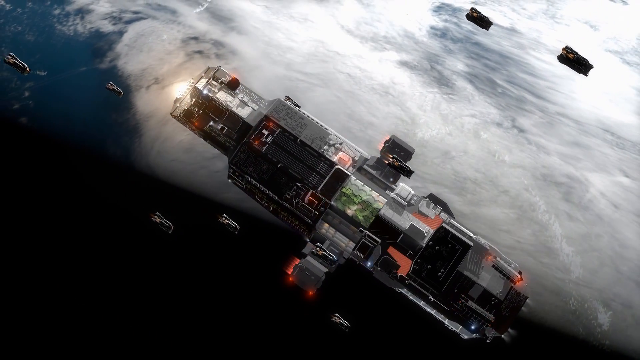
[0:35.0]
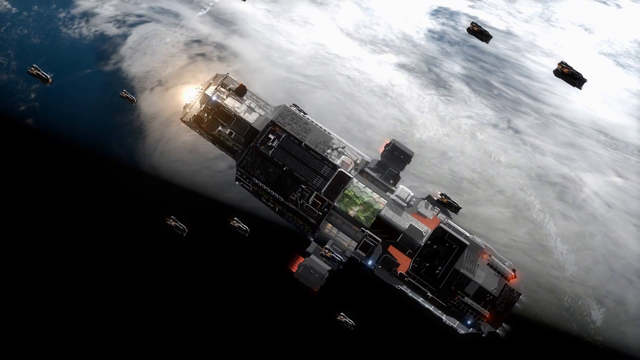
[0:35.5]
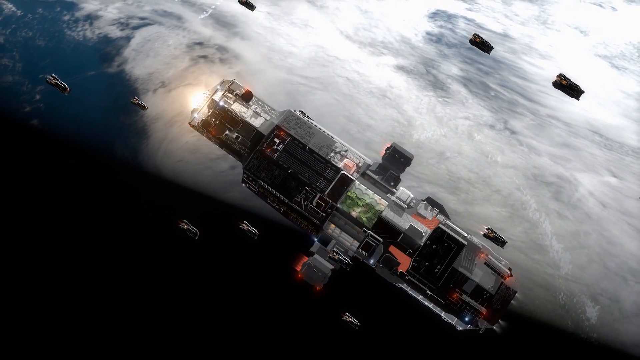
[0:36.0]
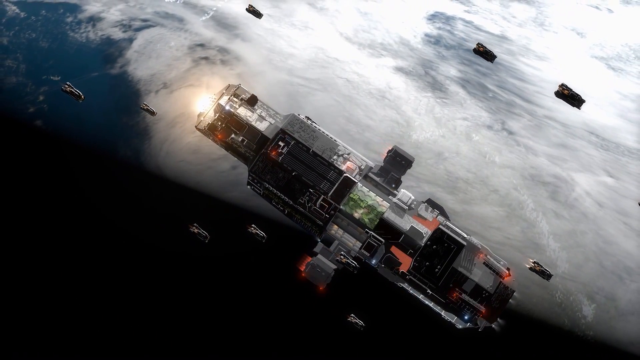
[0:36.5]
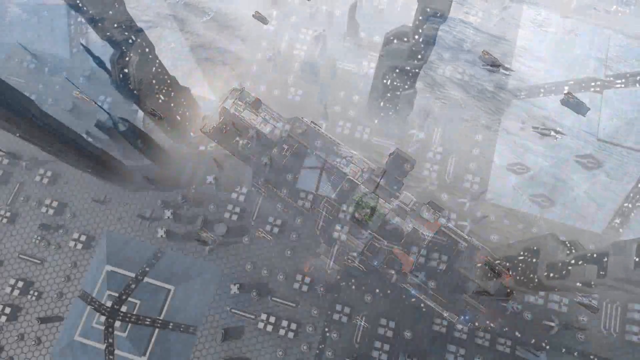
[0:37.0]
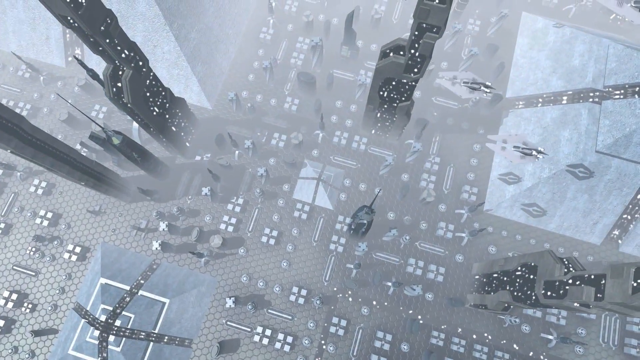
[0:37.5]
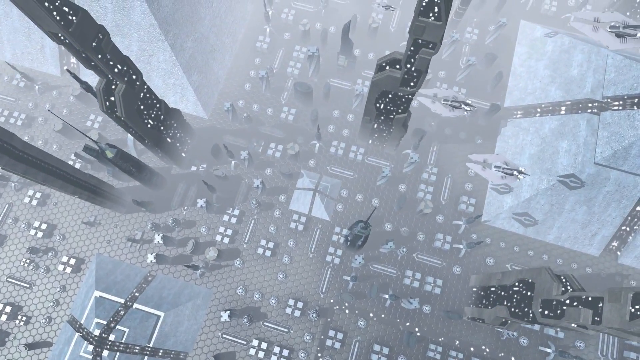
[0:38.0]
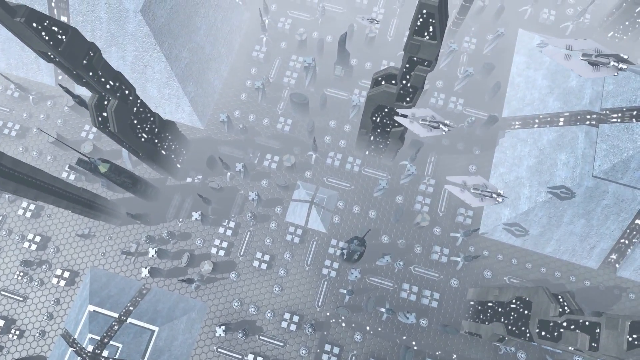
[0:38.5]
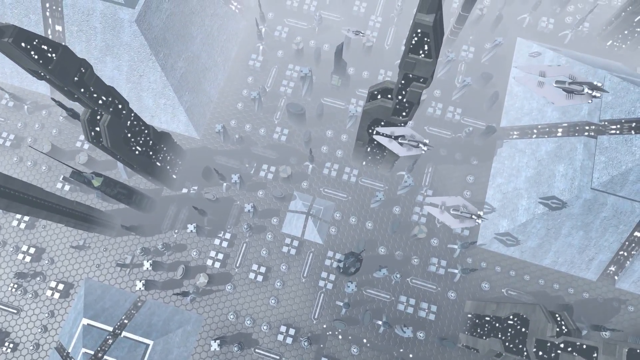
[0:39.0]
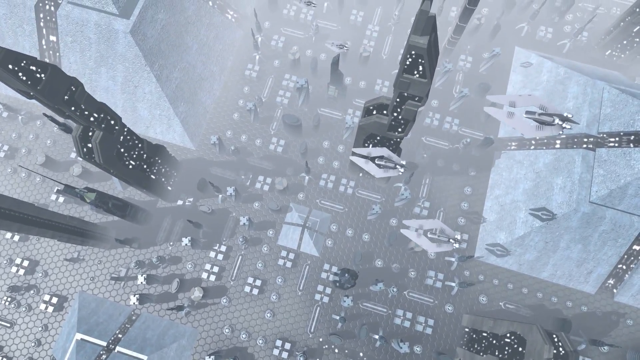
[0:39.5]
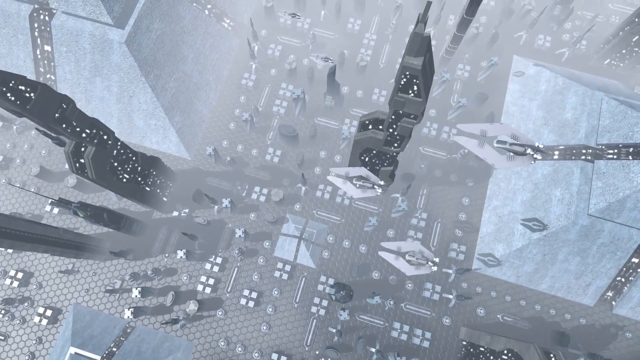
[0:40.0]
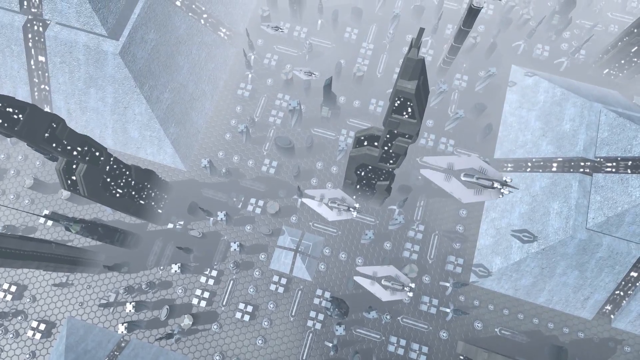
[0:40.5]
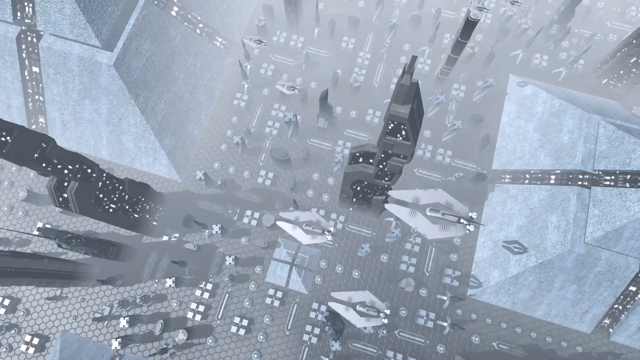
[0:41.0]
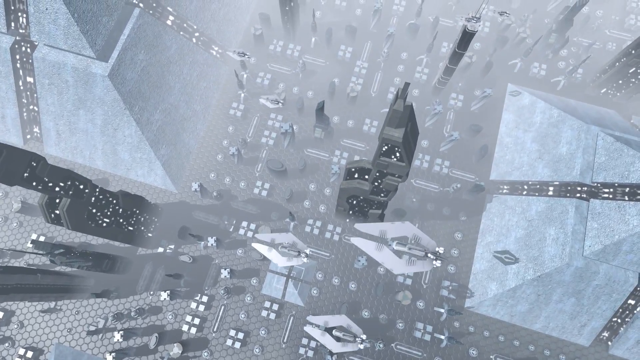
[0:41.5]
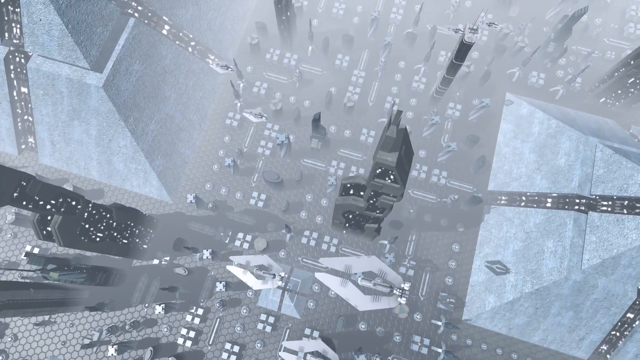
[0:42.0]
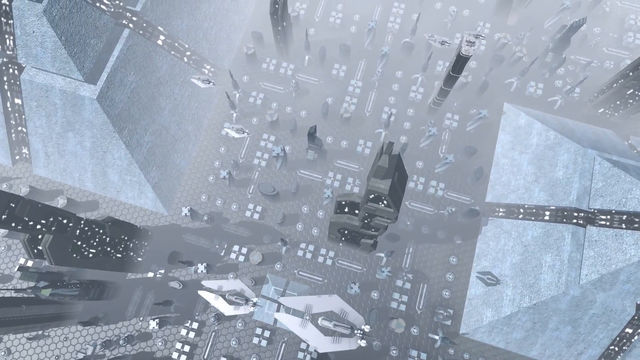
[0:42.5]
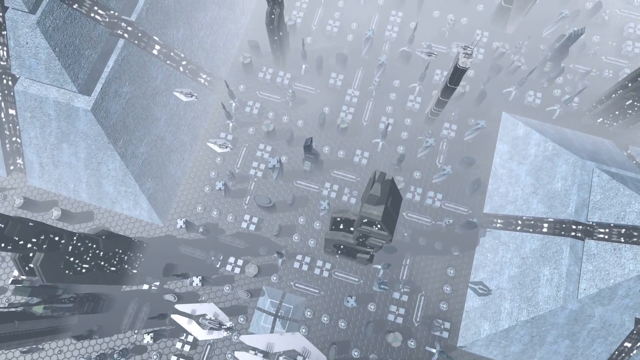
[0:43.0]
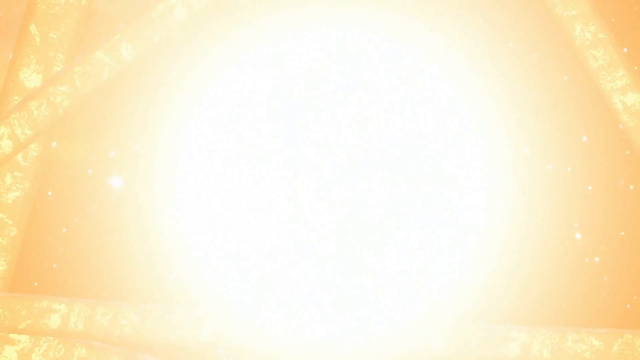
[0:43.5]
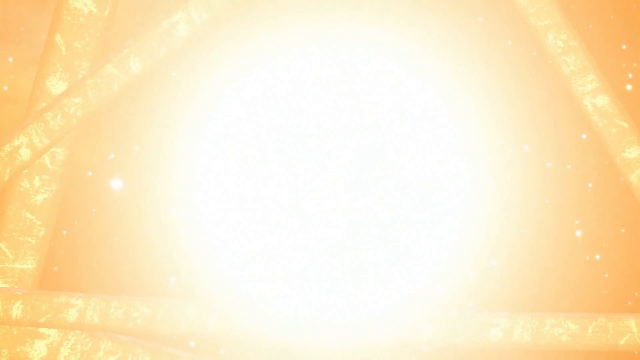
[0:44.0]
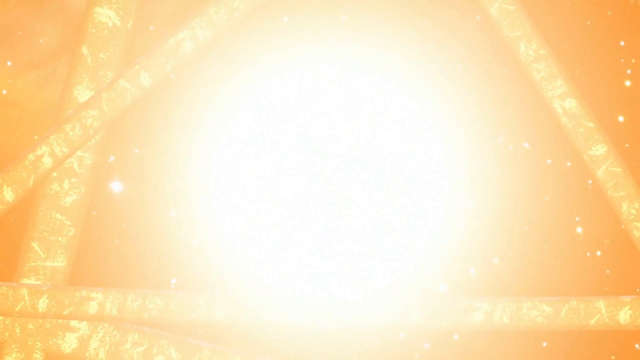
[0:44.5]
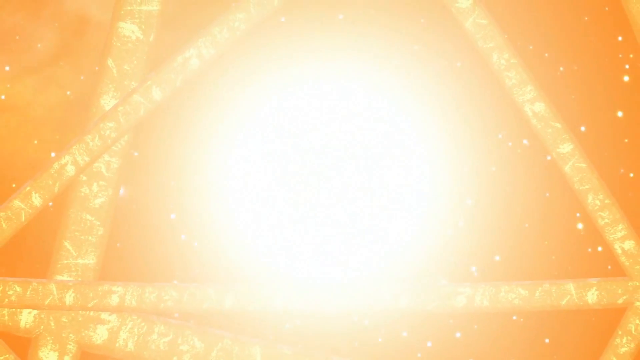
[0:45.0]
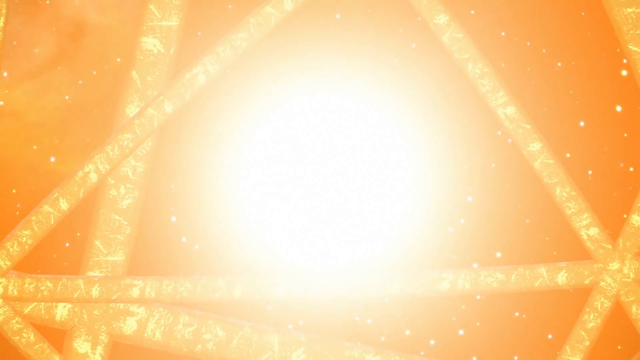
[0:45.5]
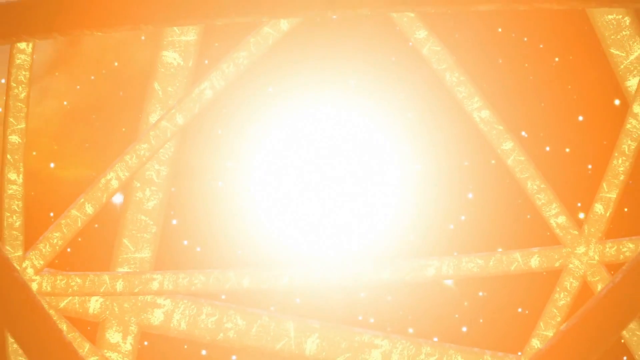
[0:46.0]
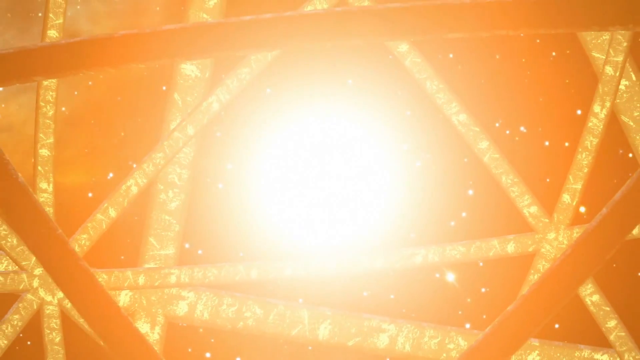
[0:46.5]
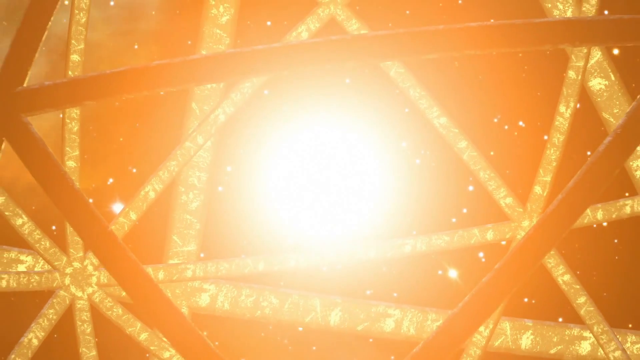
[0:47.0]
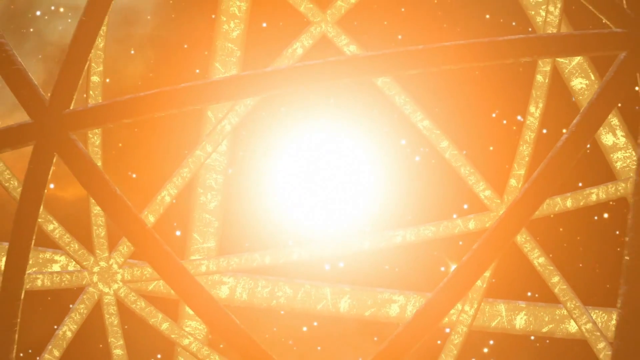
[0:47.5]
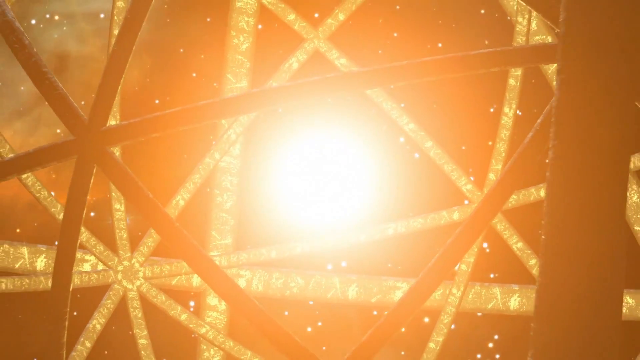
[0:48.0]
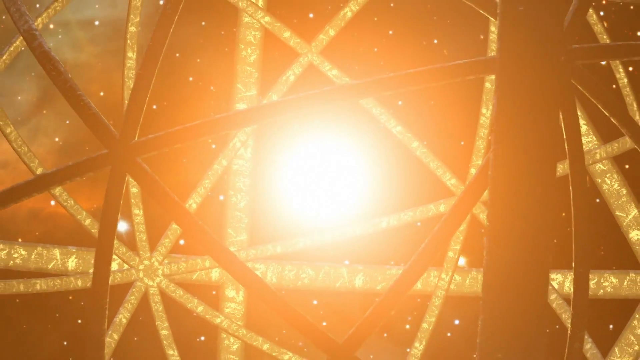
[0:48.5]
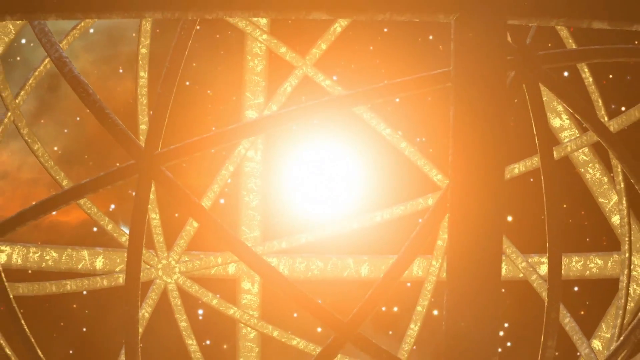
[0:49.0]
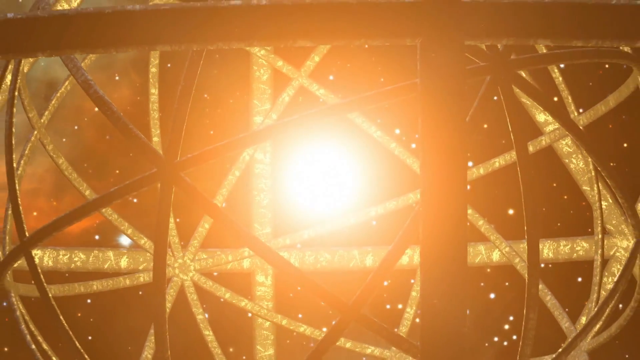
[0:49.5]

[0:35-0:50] An aerial view shows a futuristic city that seems to include a pyramid; it looks like a city with skyscrapers, and the view moves around above it. There are crafts in the air as well. A close-up follows of something almost like a ball, with a sun in the distance. The view returns to the craft with smaller crafts hovering around it and clouds beneath it, revealing that it was the front of that craft; the same glow from the ball is at its front. Next comes a very close-up view of what appears to be a city or a motherboard, with crafts moving around slowly. The video goes back and forth between the ball, the view above Earth, and the city. In outer space, stars and the glow of the ball are visible, and the craft looks as though it is connected to the ball. A close-up of the pads shows smaller crafts moving around. At the top of the larger craft there seems to be glass, through which greenery is visible, as if it is a larger space station where people live.